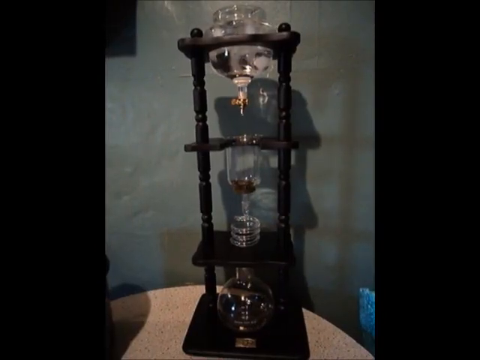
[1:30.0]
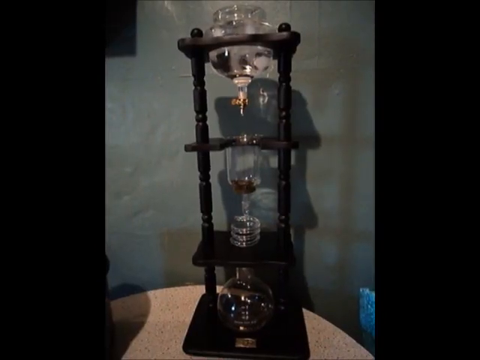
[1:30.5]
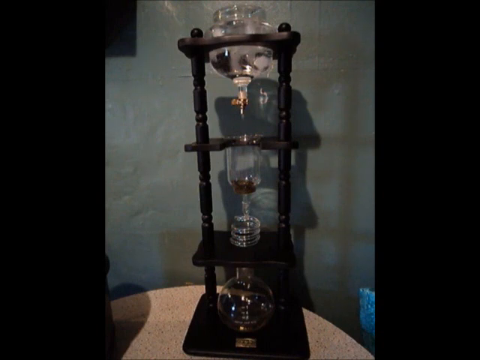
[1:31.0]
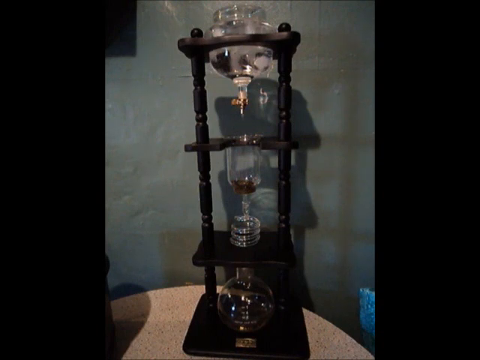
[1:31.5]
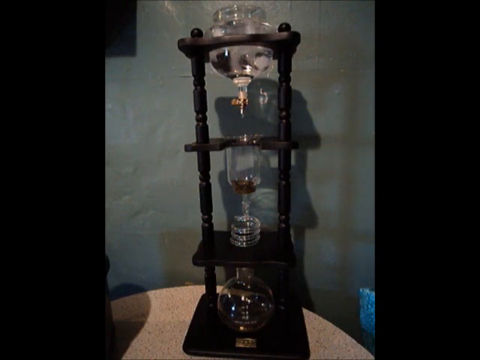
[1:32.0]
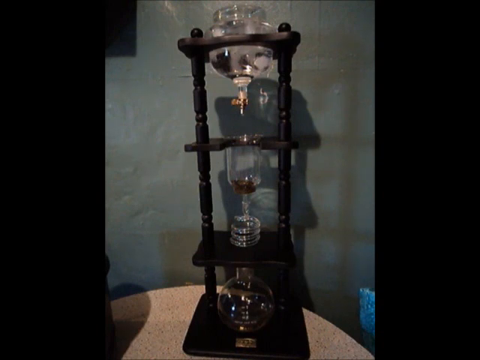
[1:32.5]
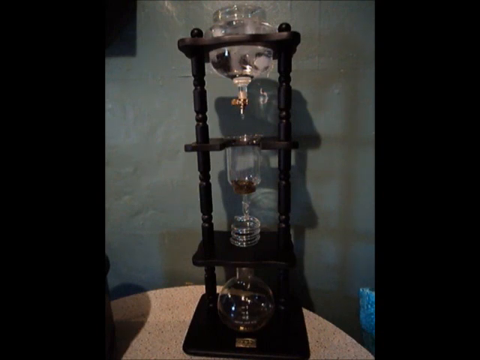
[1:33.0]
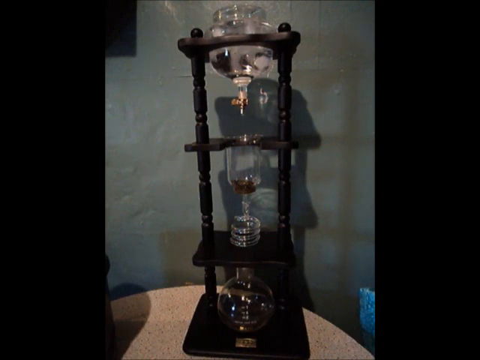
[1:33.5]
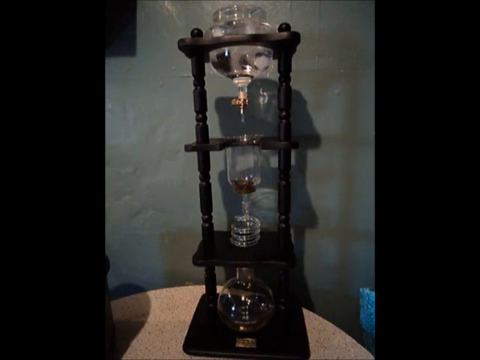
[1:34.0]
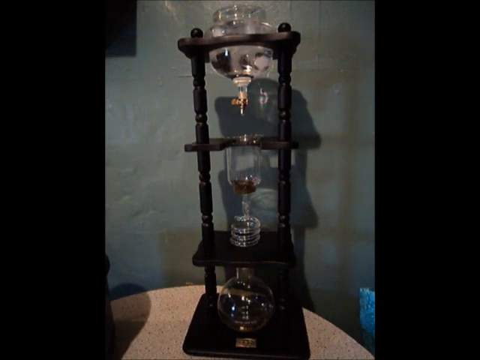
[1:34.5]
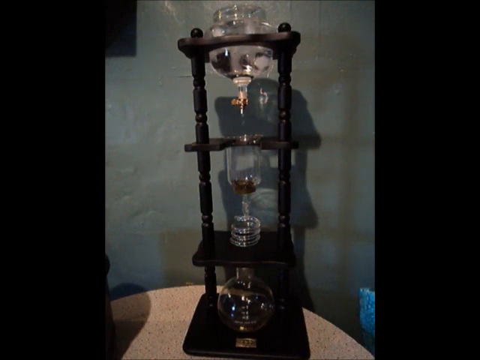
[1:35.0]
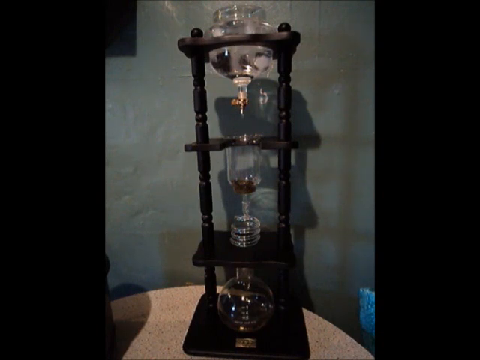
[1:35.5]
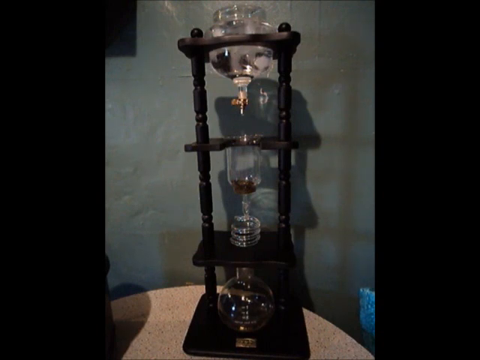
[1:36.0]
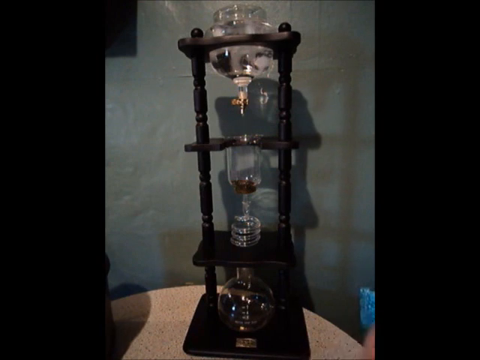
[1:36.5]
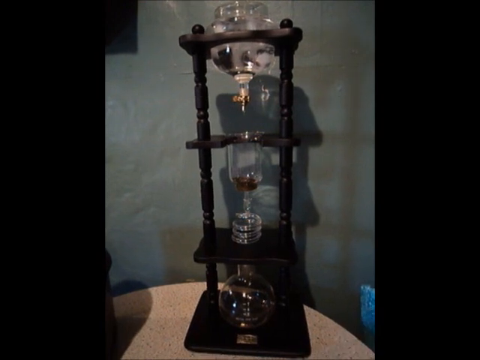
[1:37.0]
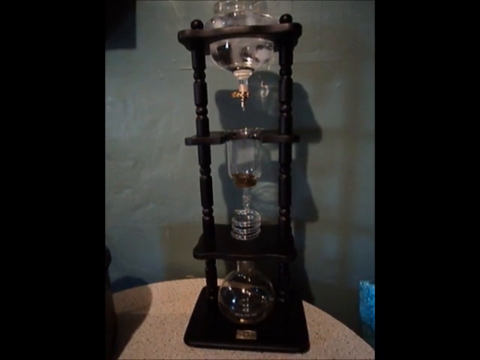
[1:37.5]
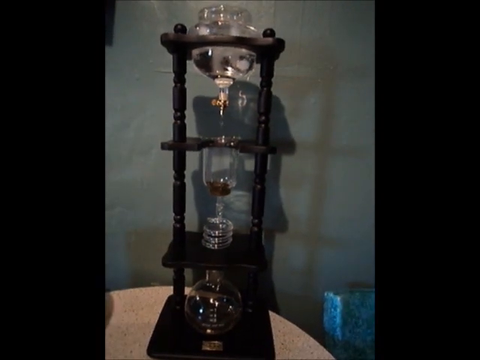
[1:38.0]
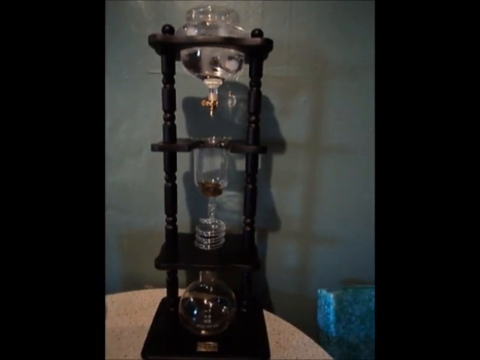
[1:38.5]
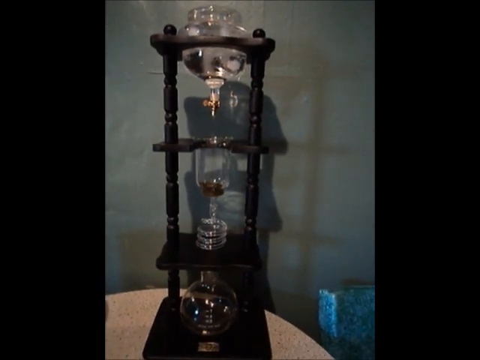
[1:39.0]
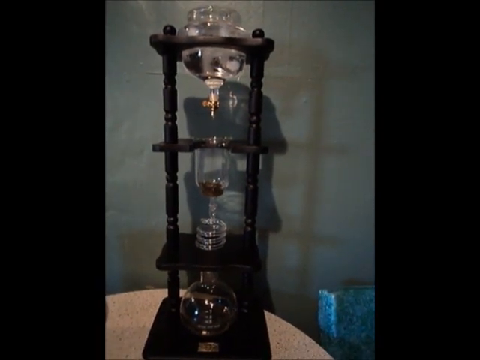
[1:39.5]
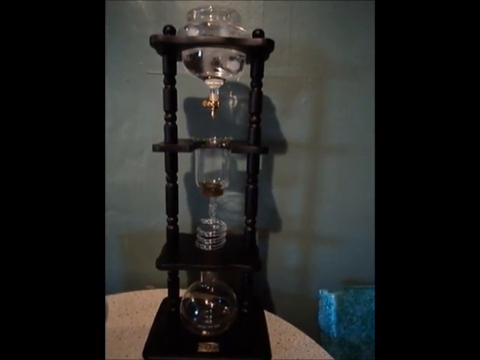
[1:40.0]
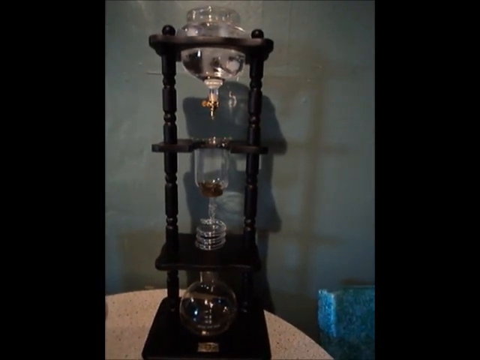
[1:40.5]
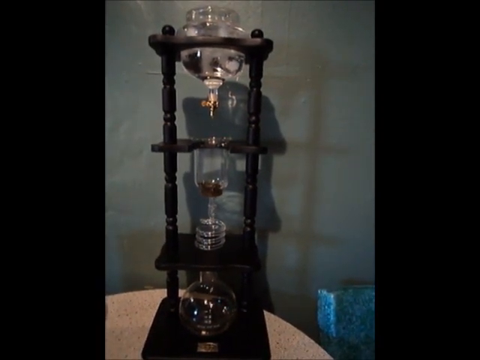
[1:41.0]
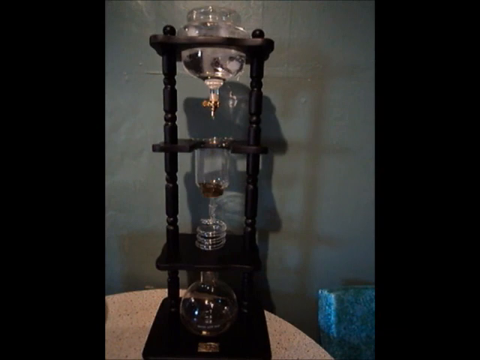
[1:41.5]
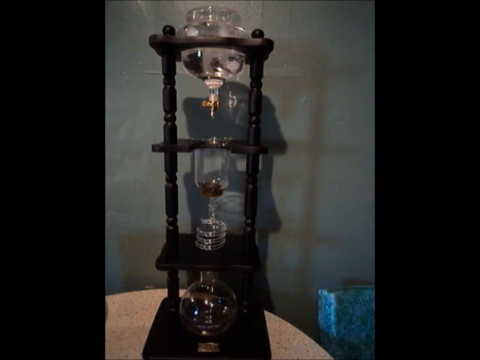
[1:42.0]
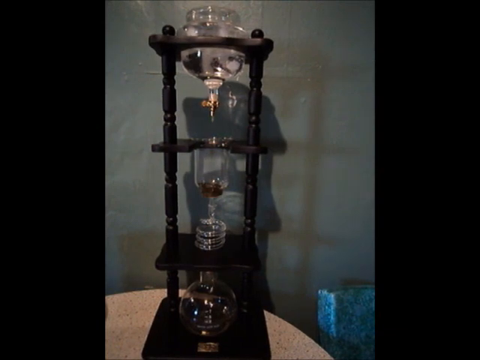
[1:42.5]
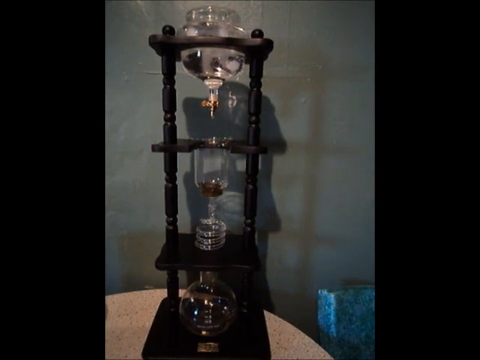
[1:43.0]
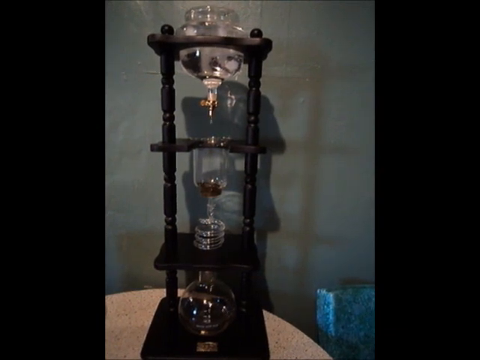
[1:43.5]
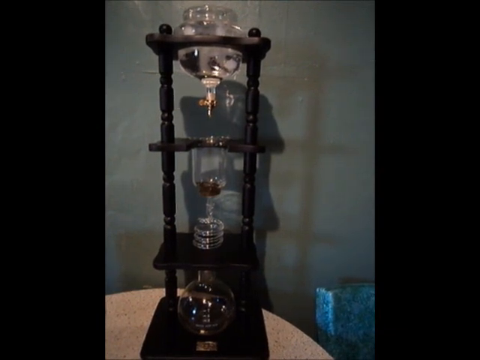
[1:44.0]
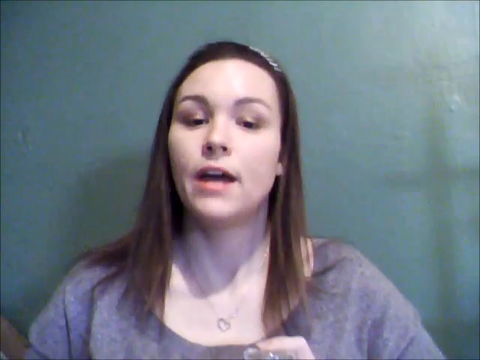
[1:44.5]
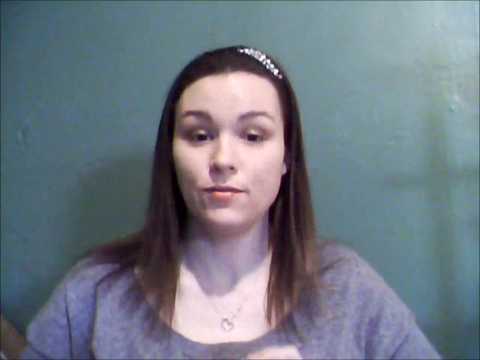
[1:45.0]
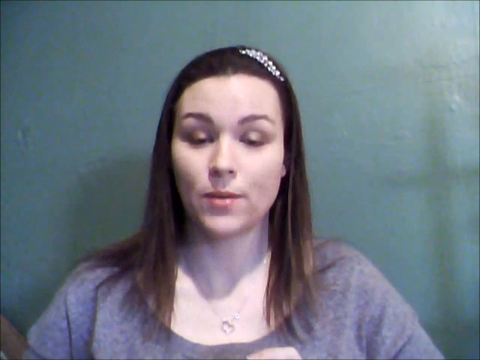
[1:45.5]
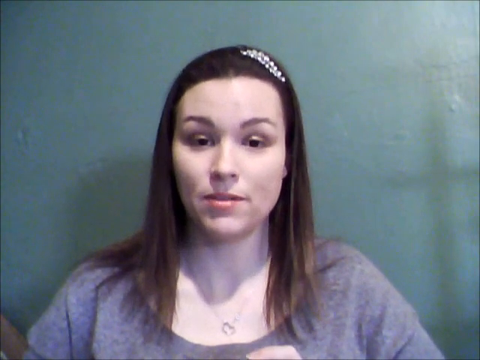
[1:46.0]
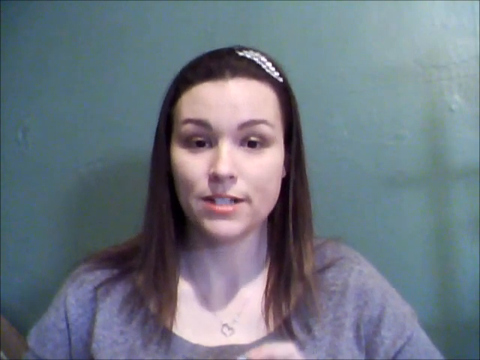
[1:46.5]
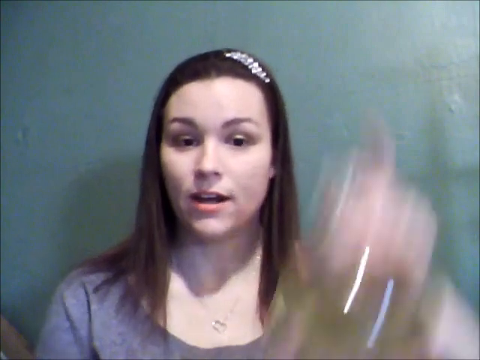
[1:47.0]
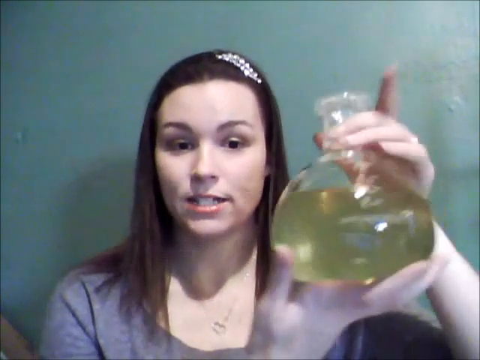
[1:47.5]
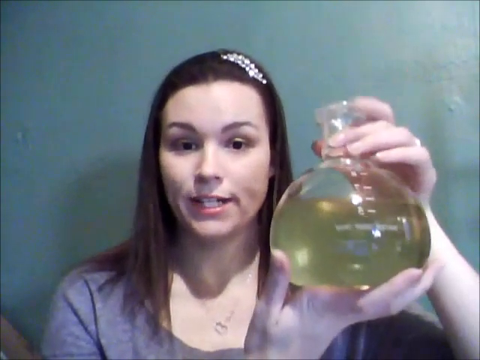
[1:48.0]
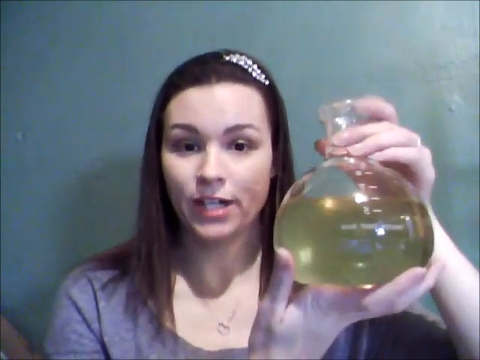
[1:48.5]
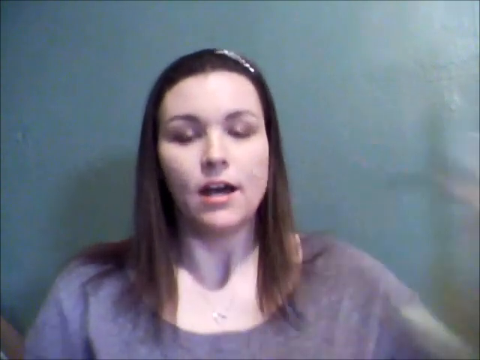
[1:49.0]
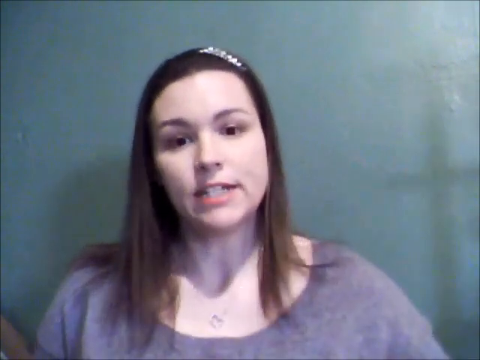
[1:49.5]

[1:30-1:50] The view zooms back out to a wider shot showing all the shelves and the different glass pieces: water in the top one, tea leaves in the second, and the bottom one where the finished product drips in. The nozzle under the top piece drips a little, but none of the others can be seen dripping. The top piece has a big round bottom and is kind of flat on top, fitted into a hole cut in the top shelf, and it hangs down probably about two-thirds of the way to the next shelf. The next piece is almost like a mason jar; the shelf has a cut like a groove so it slips right in, and its lip holds it in place. Underneath it is the spiral portion, which goes around about three times. Under that, on the third shelf down, is the big, round, bulbous glass piece with a kind of longer neck, still being dripped into from the nozzle. The video then cuts back to the woman talking in front of the green wall, looking into the camera. On the right side, she lifts up what is almost like a big round beaker, the one from the bottom, holding liquid that is almost kind of yellowy. Her right hand is on the neck and her left hand is on the bottom, fingers outstretched around it. She then moves it off the right side of the screen and continues to talk.